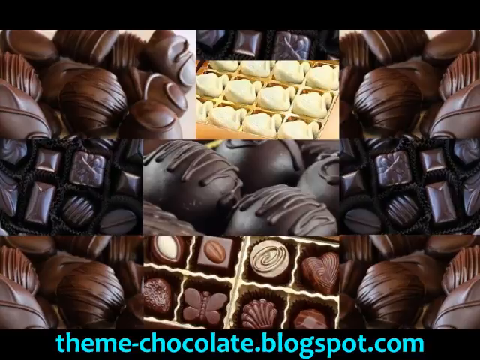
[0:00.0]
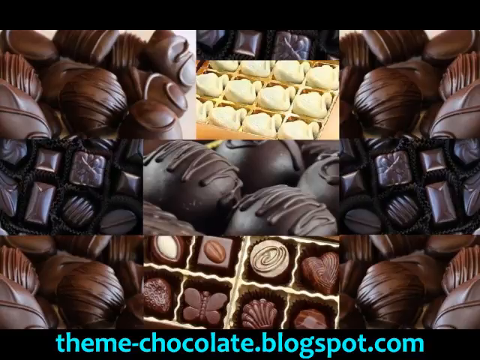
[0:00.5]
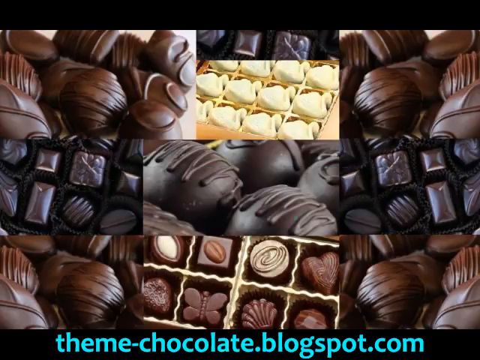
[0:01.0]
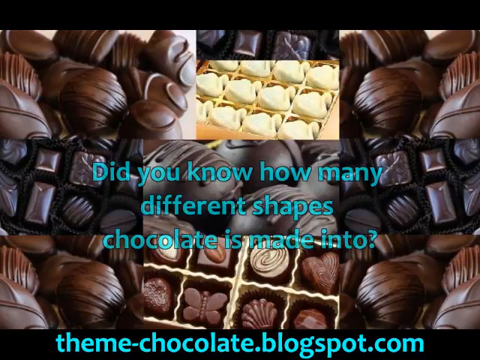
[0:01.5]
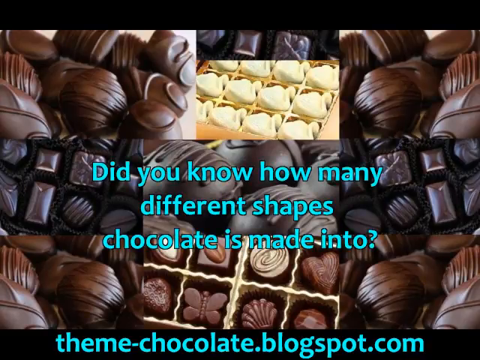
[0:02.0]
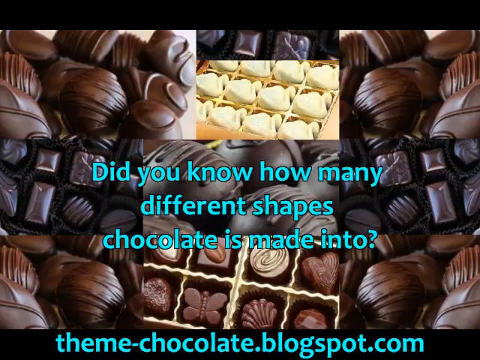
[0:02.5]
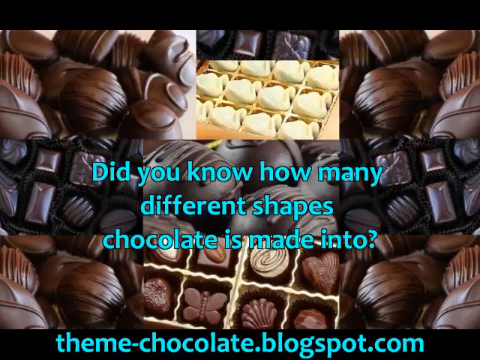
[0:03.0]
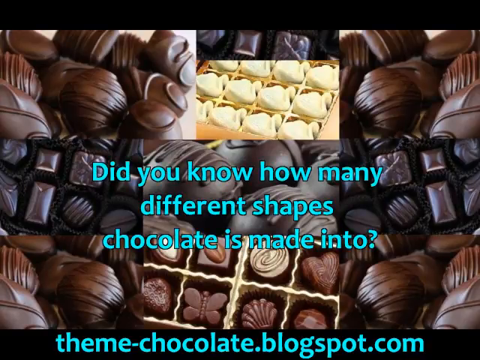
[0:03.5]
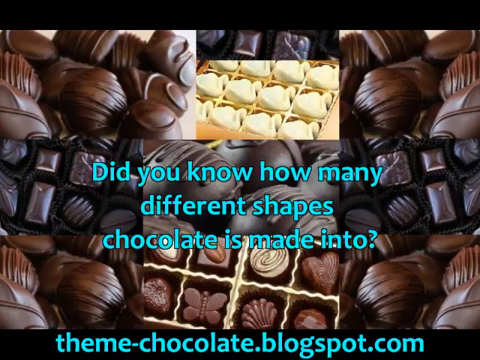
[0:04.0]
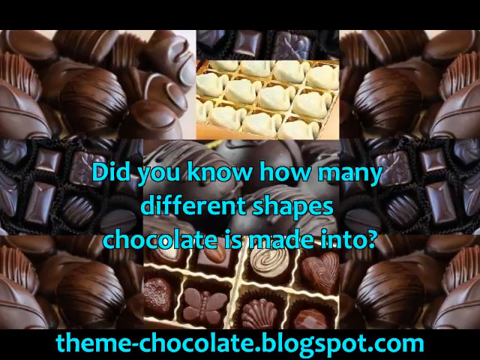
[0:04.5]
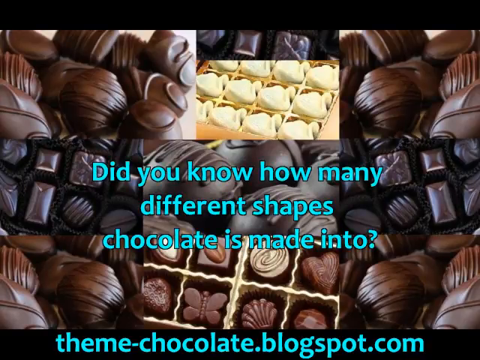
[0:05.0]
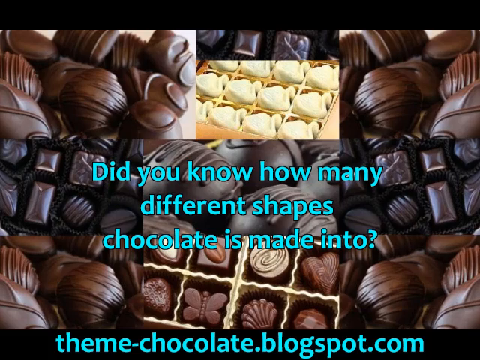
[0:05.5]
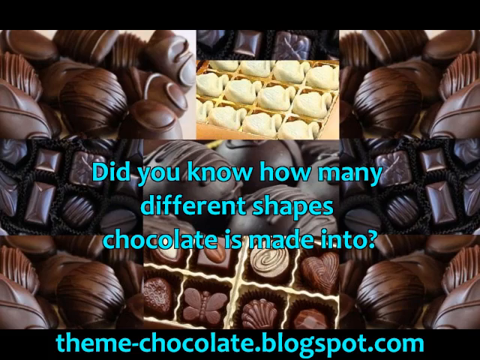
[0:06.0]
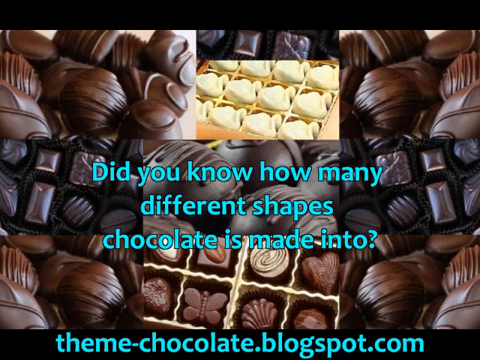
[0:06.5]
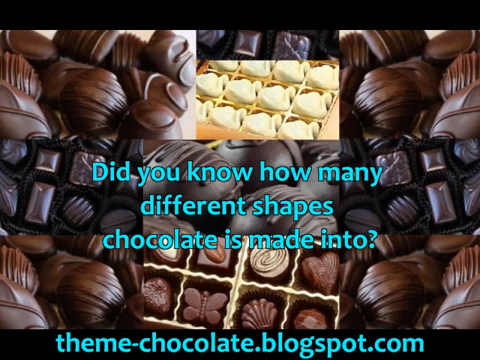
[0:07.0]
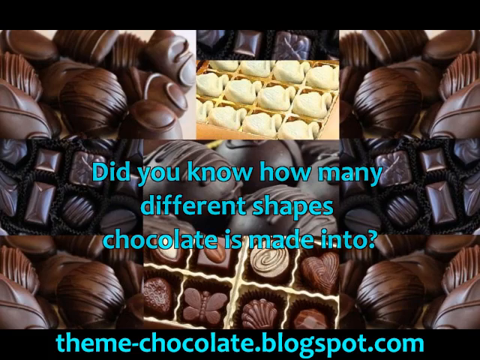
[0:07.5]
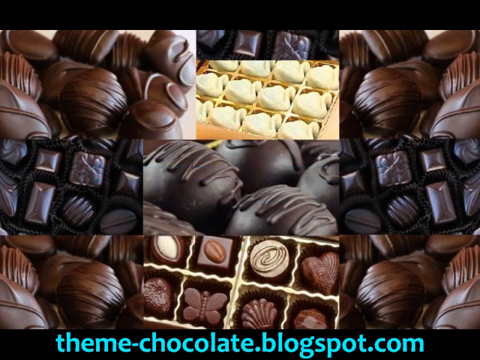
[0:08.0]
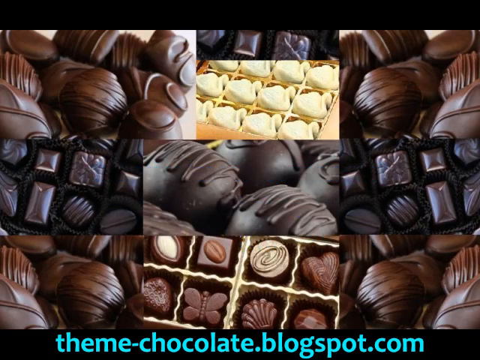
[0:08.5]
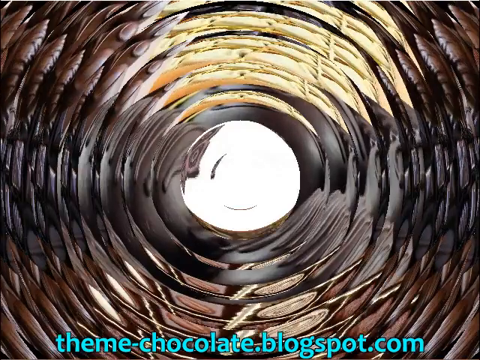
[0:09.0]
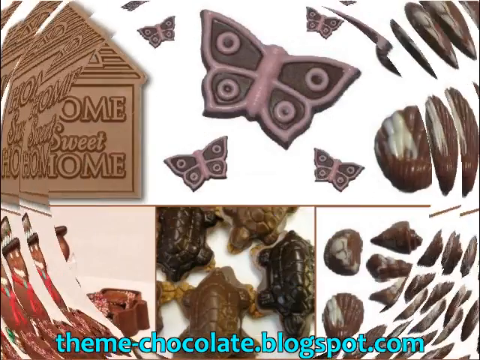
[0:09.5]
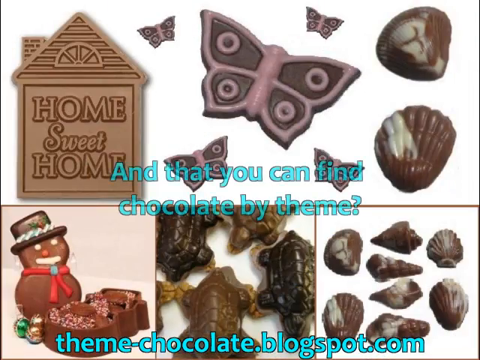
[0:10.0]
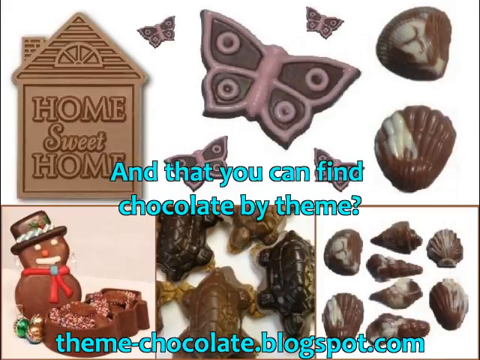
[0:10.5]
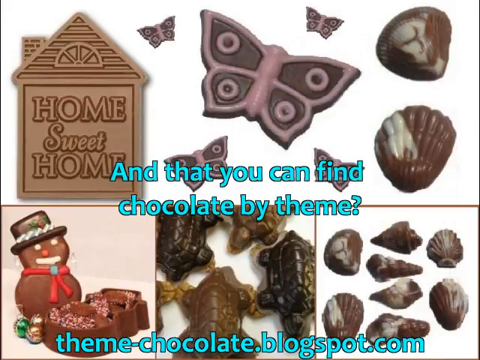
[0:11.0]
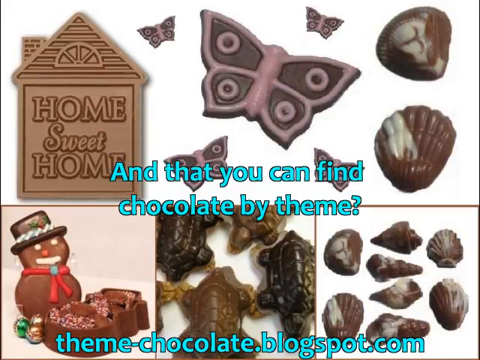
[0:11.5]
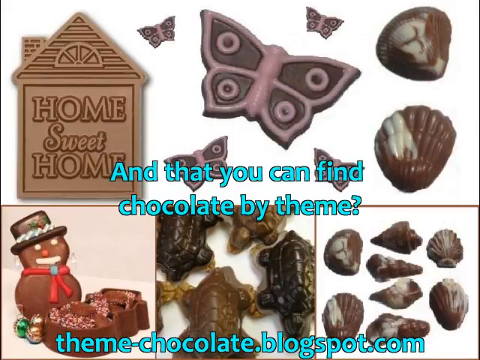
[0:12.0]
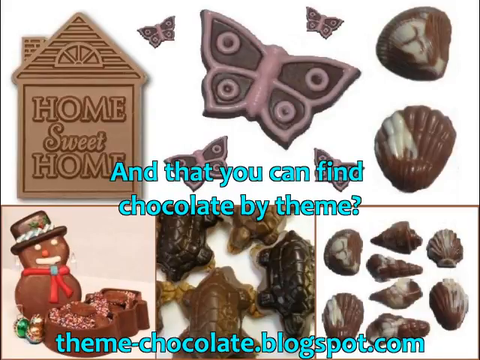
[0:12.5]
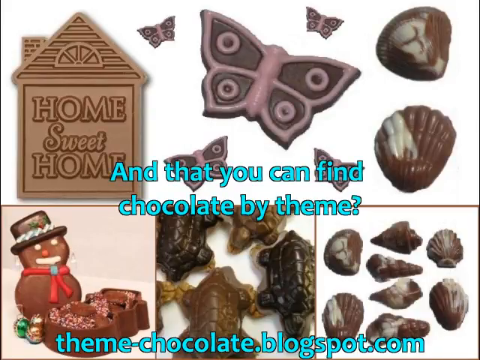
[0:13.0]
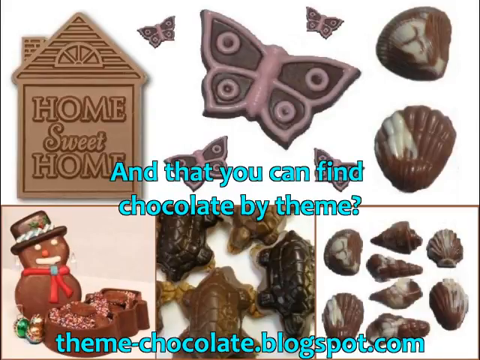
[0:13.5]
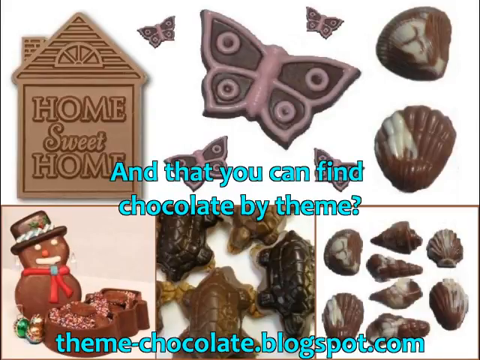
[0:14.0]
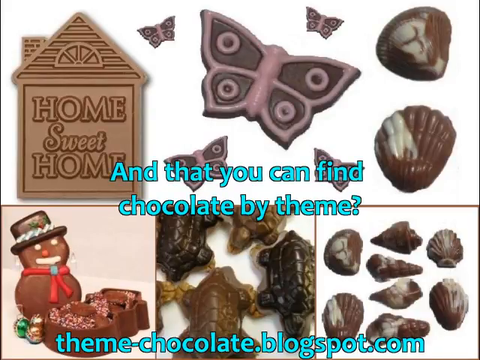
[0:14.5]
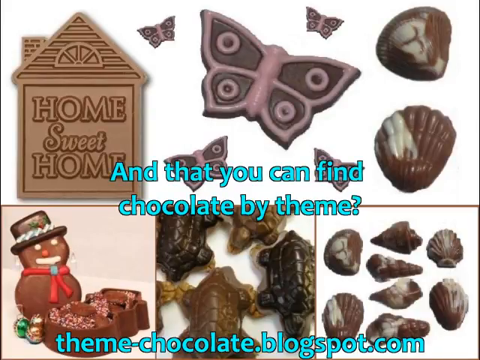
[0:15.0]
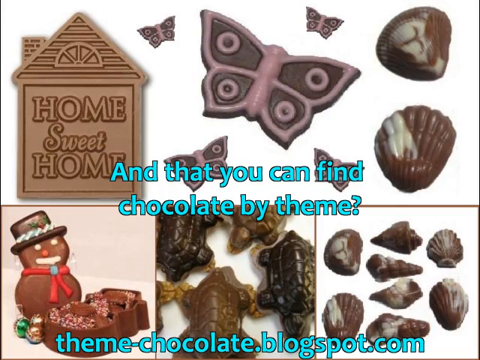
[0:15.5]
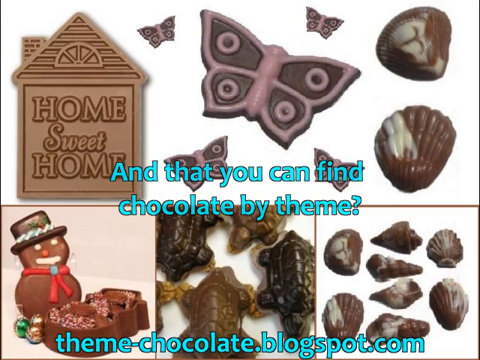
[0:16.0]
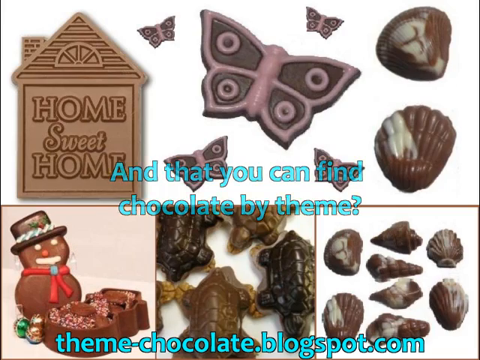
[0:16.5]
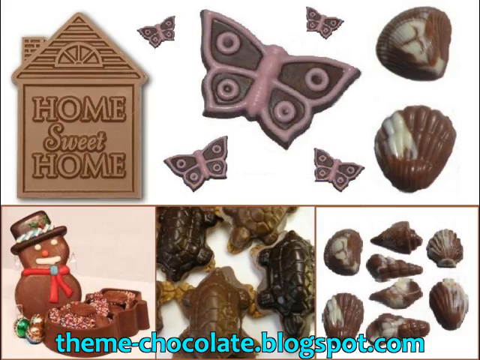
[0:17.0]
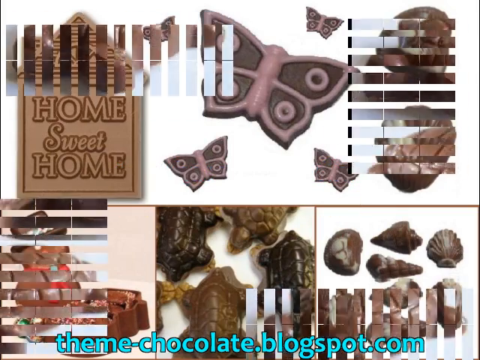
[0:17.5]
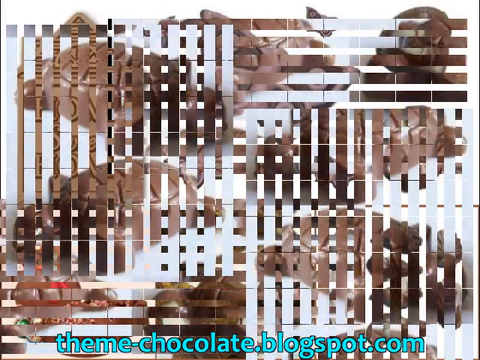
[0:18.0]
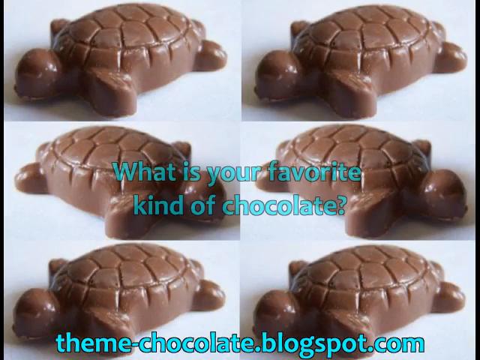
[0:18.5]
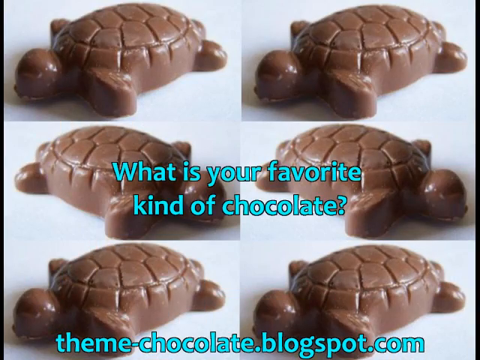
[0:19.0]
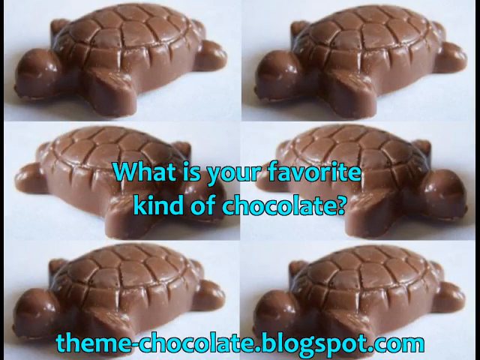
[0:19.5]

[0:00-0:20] The video opens with a collage of about nine images, each showing chocolates. The chocolates come in different shapes and in white, brown and dark brown, and they look like expensive gourmet chocolates as well as chocolate-covered candy. Green text across the top reads, "did you know how many different shapes chocolates is made into?" The chocolates and green text stay on screen for about eight seconds. The screen then transitions to a collage of four images showing chocolates in different shapes, including butterfly and shell shapes. Another transition shows an image of six chocolates in a turtle shape, with green text across the screen reading, "what is your favorite kind of chocolates?"